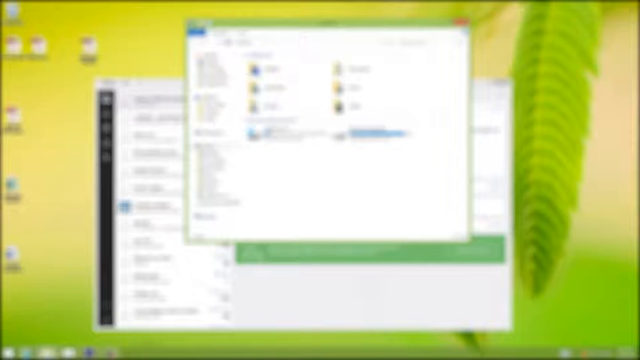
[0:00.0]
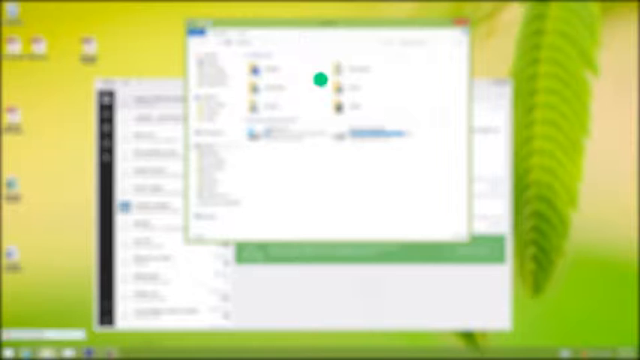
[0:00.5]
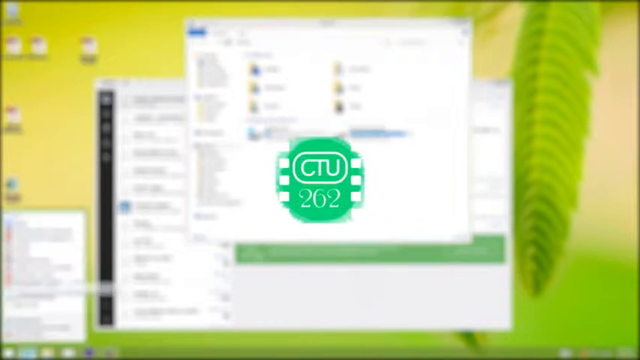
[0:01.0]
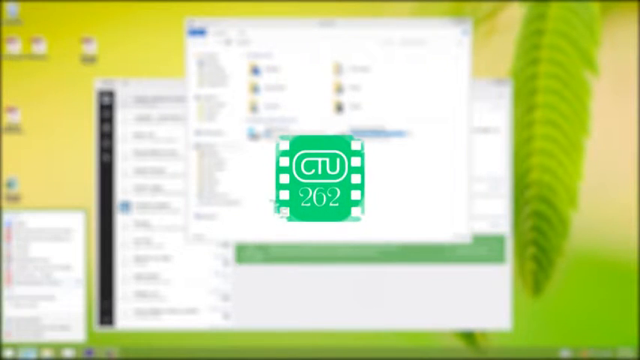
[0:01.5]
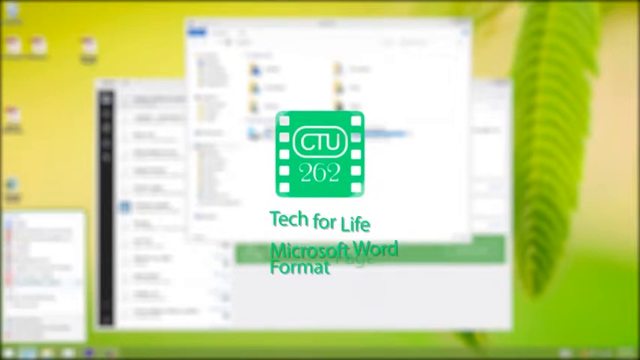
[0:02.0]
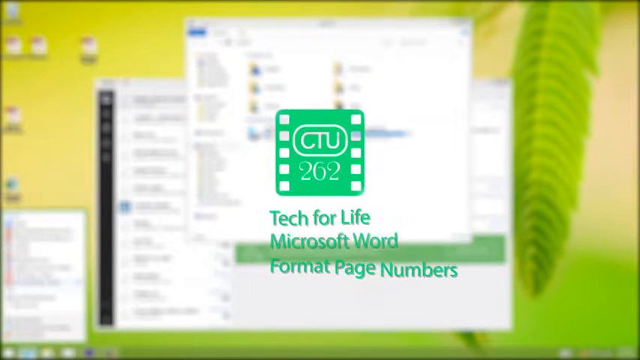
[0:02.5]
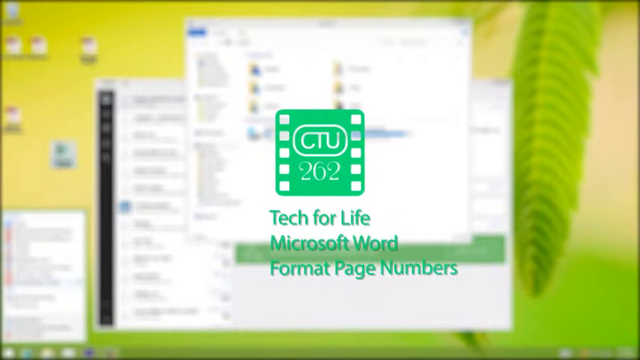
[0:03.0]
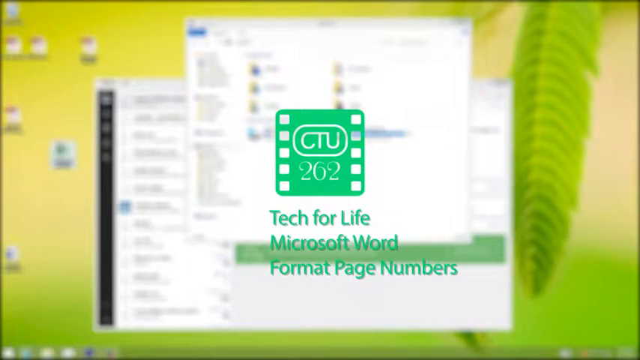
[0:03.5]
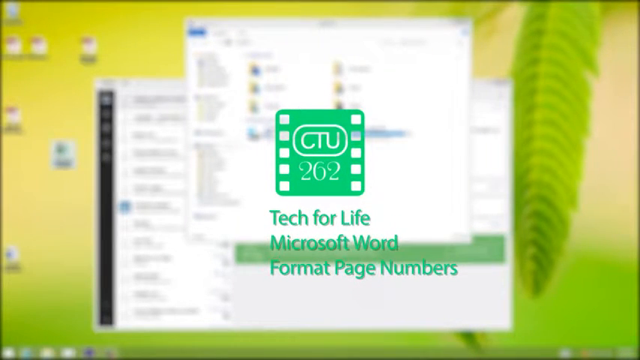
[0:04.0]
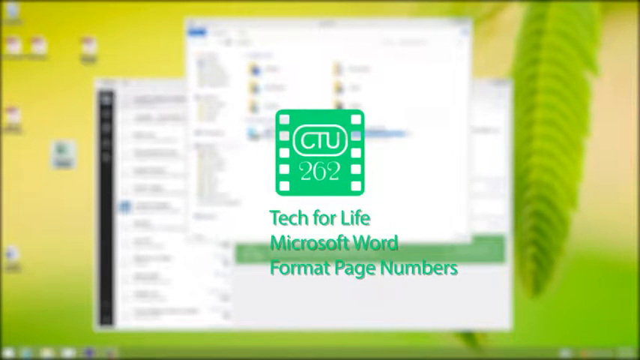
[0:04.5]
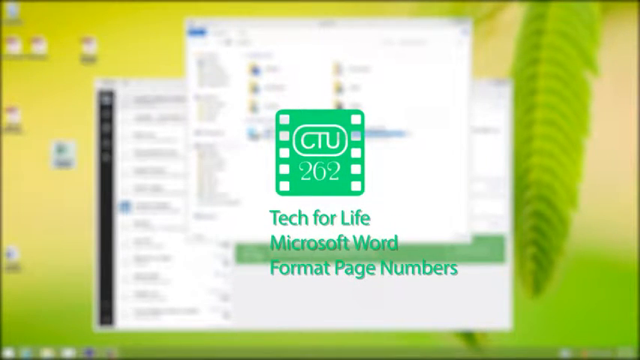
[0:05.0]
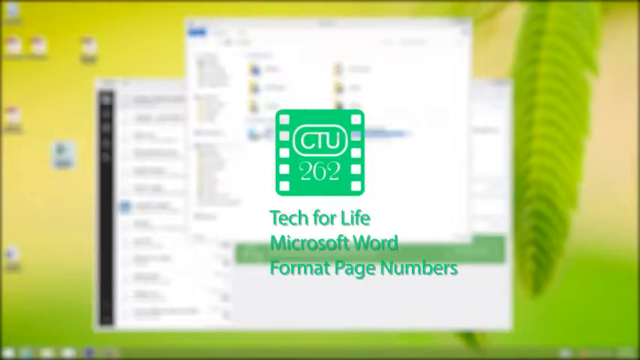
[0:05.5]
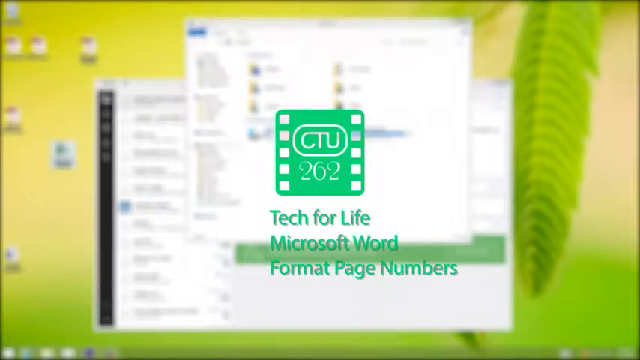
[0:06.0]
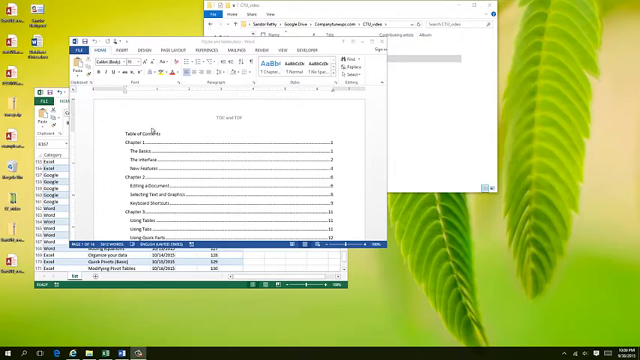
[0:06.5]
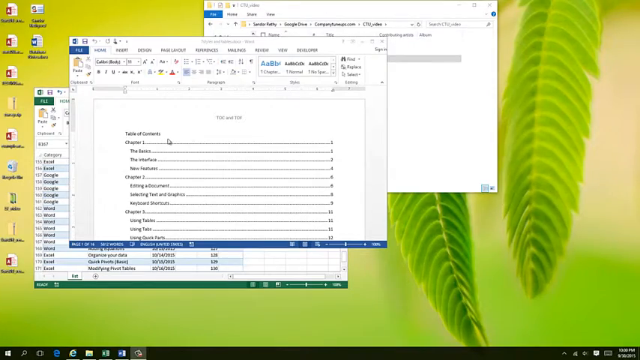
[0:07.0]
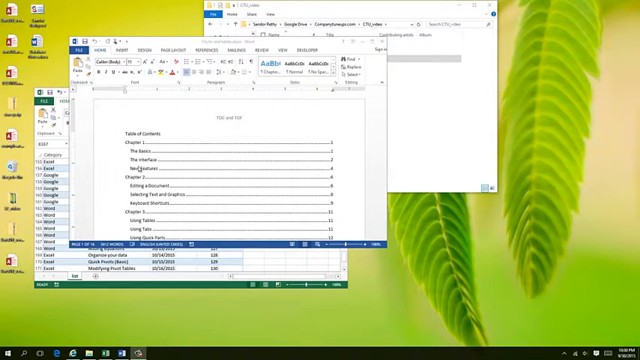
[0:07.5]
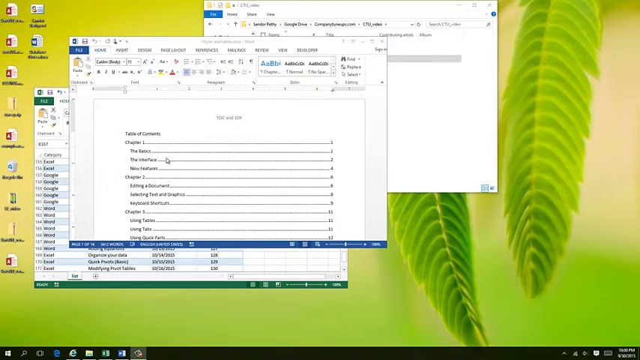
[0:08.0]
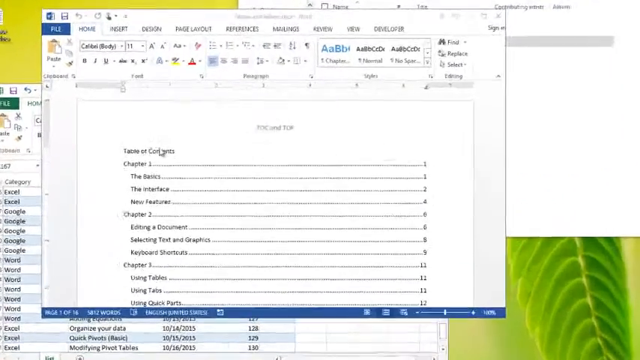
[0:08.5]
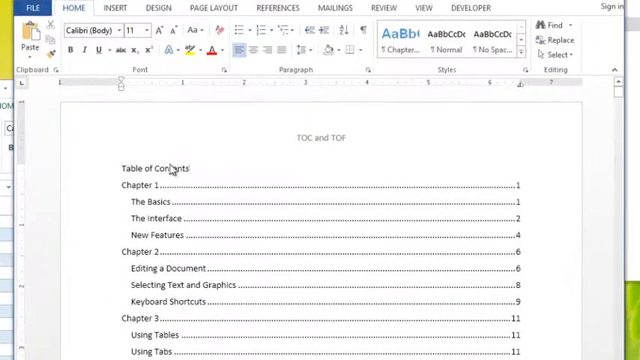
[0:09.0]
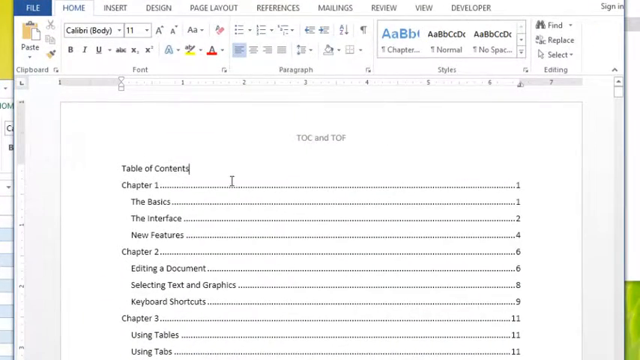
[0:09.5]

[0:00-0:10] The video appears to be an overview from a training on formatting page numbers in Microsoft Word. A pop-up is shown over a background.